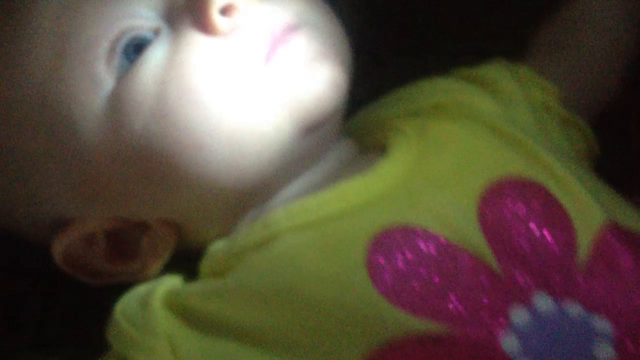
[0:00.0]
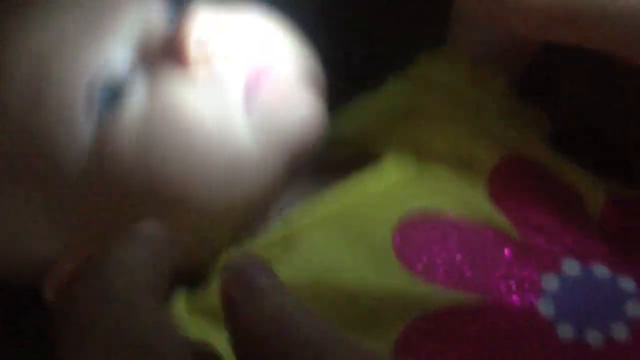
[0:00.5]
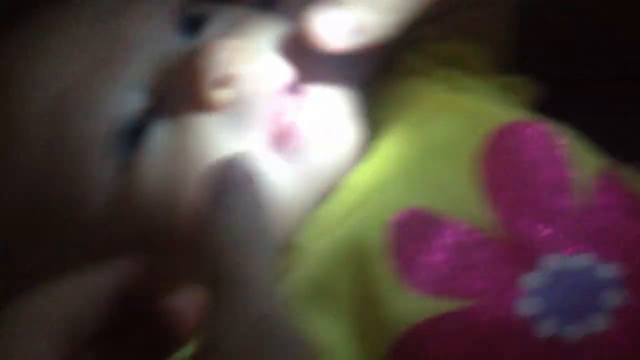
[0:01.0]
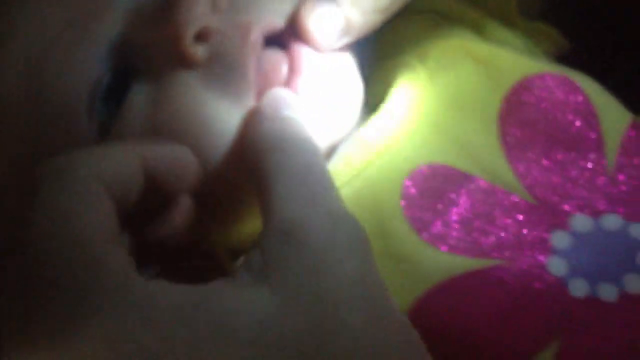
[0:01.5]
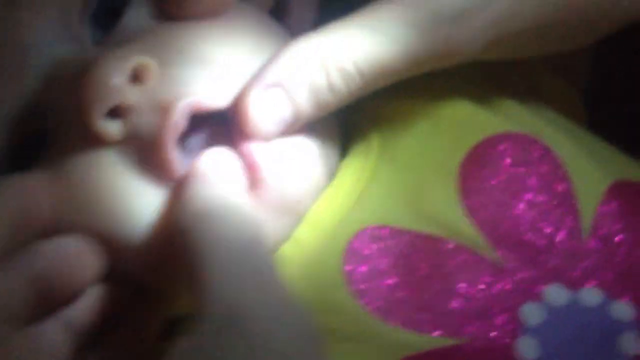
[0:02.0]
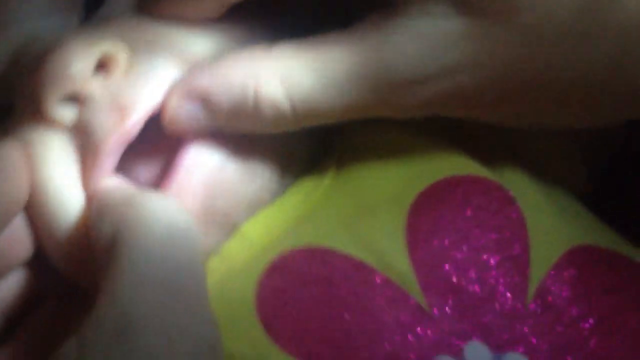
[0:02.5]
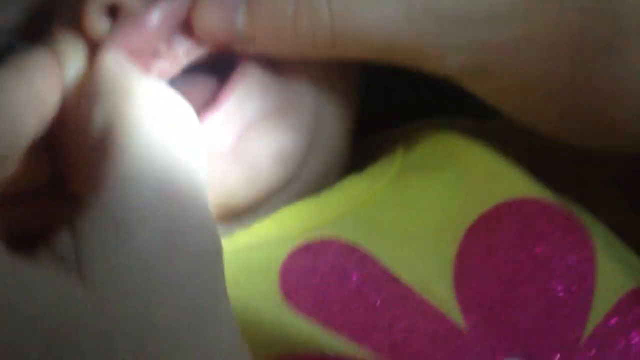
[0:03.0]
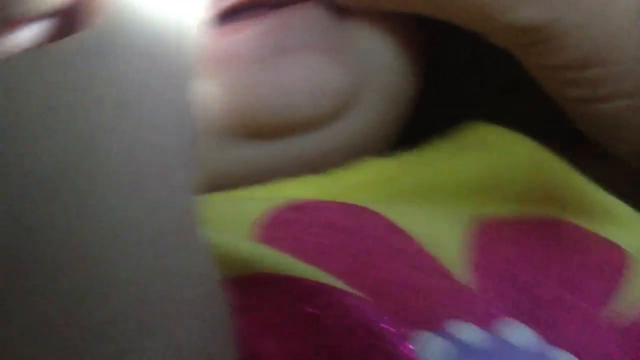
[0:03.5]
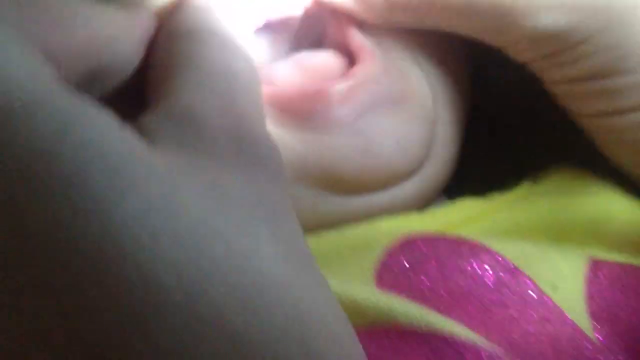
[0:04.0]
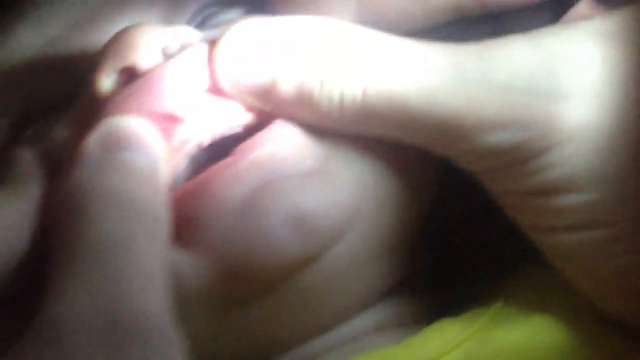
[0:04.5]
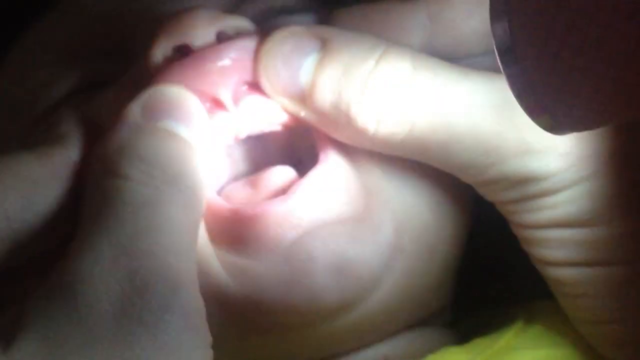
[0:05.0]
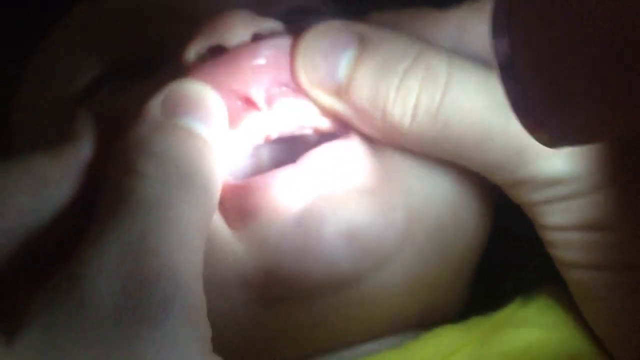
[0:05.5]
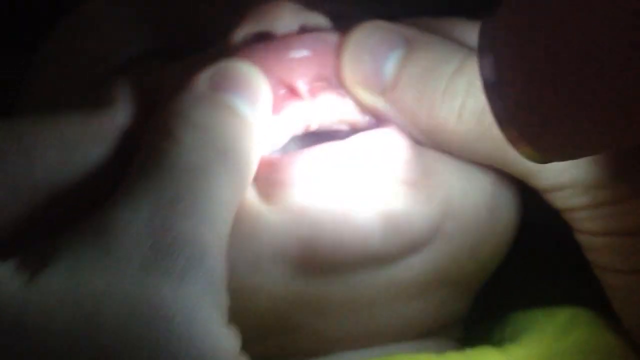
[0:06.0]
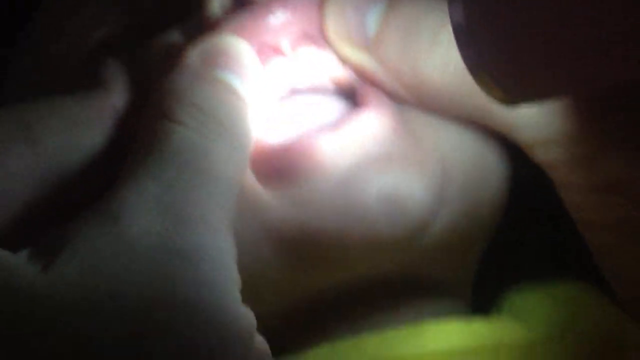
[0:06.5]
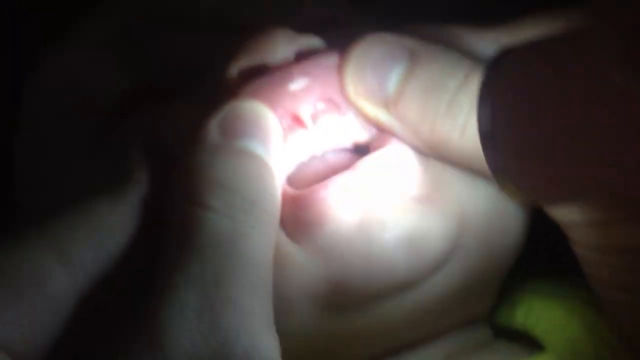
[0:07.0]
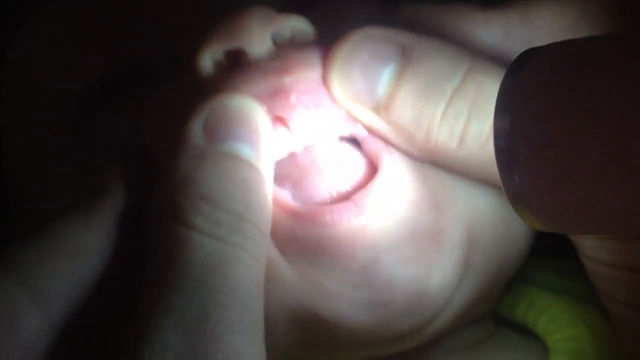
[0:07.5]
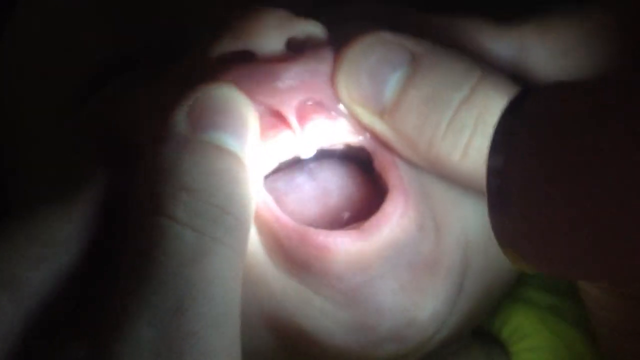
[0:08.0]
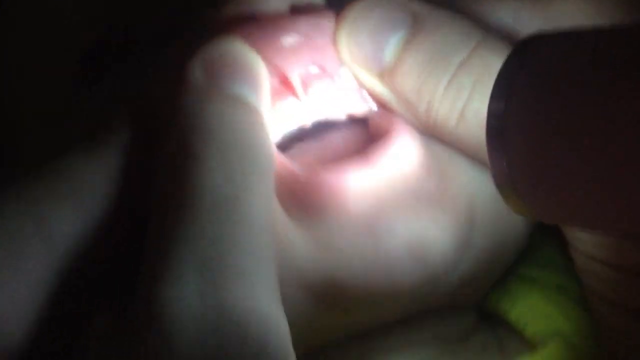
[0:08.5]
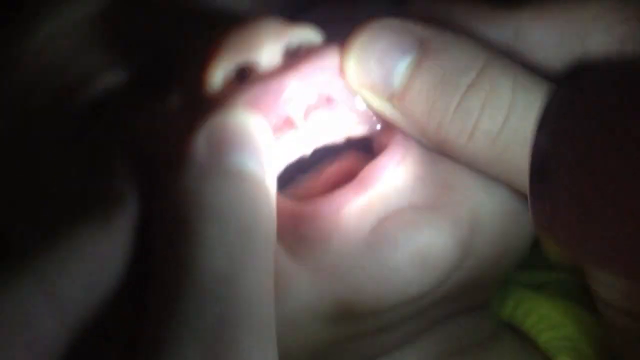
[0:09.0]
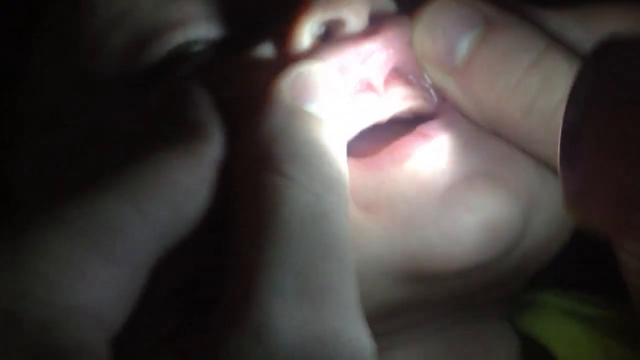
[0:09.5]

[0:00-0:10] A close-up shows the head and chest area of a baby who is lying down. The baby wears a yellow short-sleeve shirt with a pink sparkly flower on it and has blue eyes. An adult holds up the baby's lip, flipping it open with their thumbs and kind of holding it up to the baby's nose. Someone shines a small flashlight into the baby's mouth, and they appear to be examining the top gums, which kind of look like they have indented spots where teeth will grow.